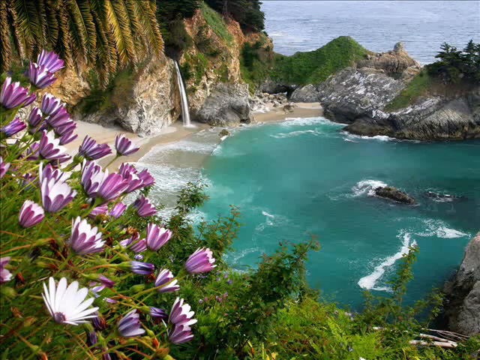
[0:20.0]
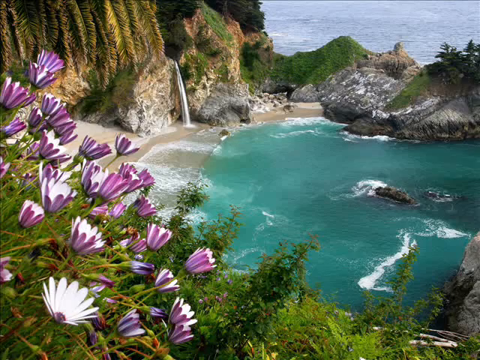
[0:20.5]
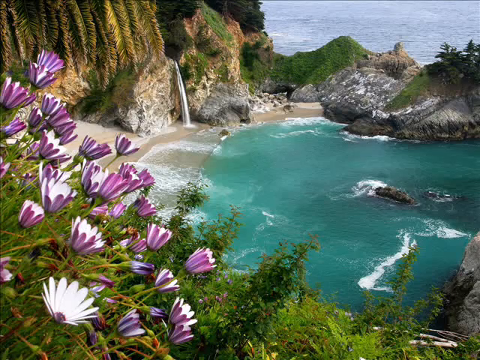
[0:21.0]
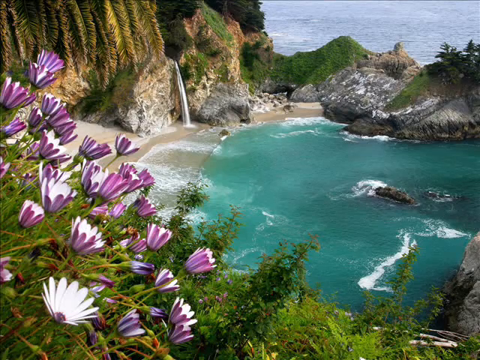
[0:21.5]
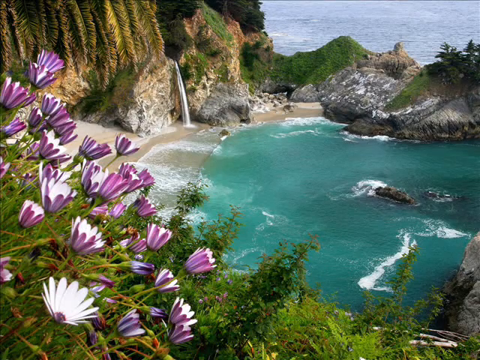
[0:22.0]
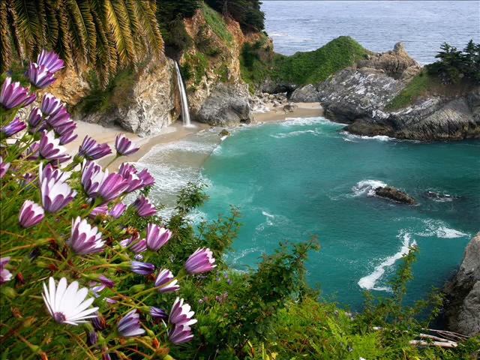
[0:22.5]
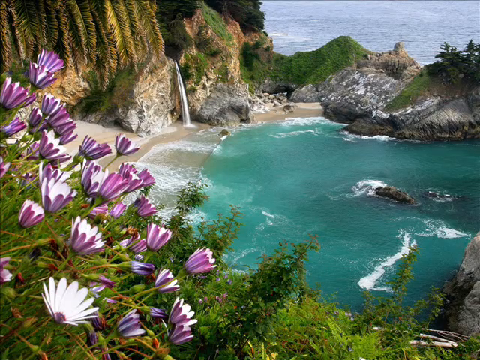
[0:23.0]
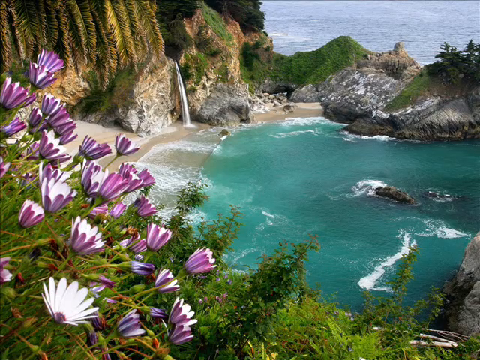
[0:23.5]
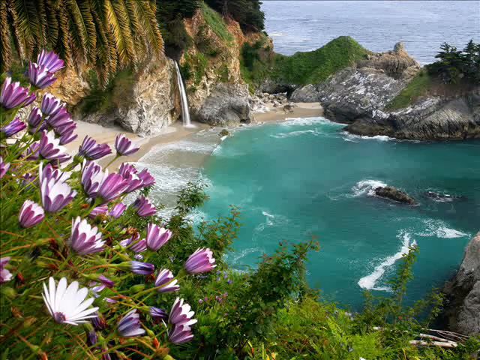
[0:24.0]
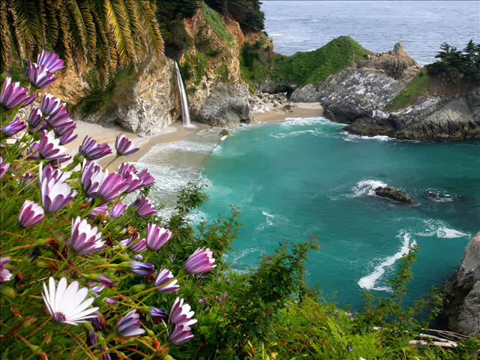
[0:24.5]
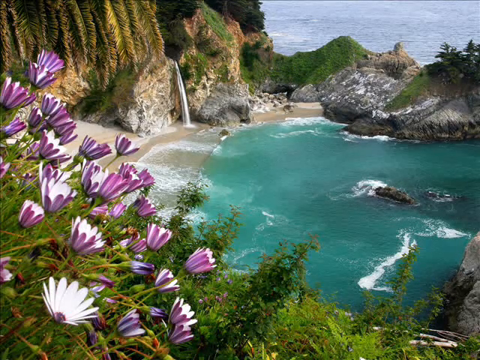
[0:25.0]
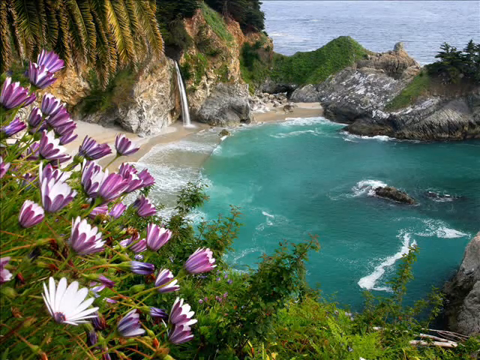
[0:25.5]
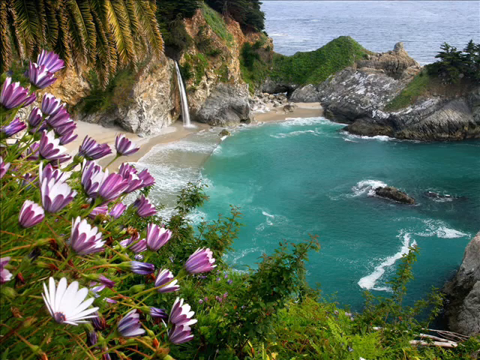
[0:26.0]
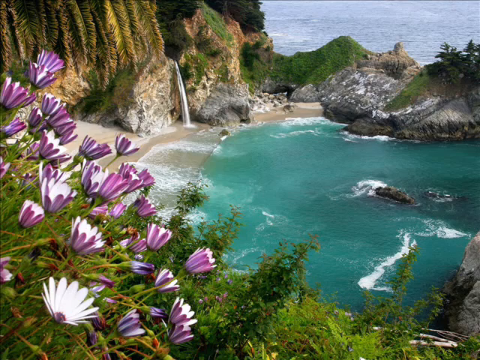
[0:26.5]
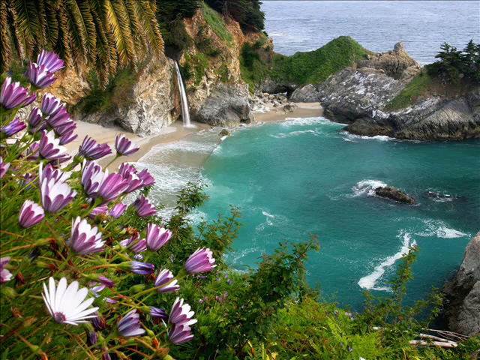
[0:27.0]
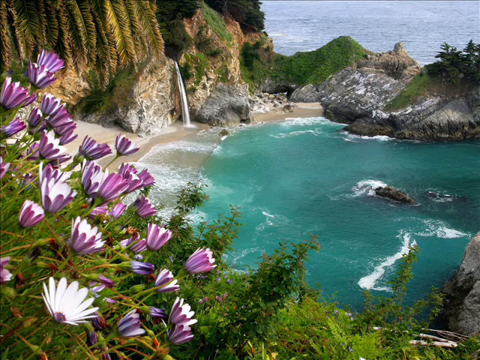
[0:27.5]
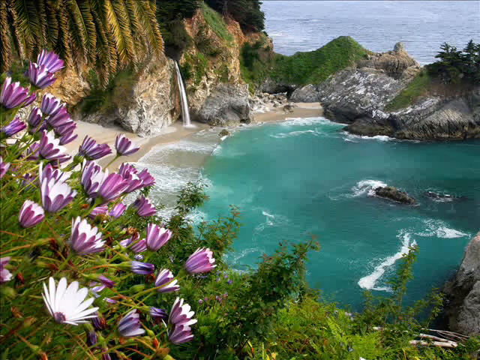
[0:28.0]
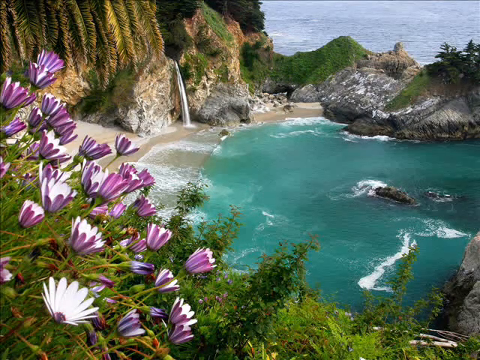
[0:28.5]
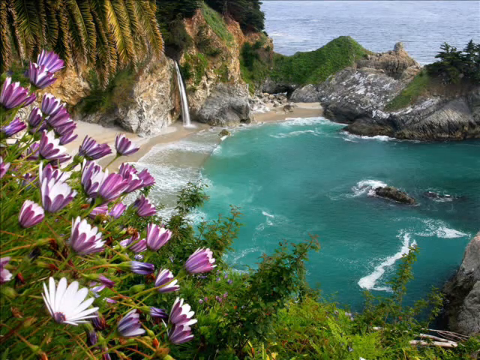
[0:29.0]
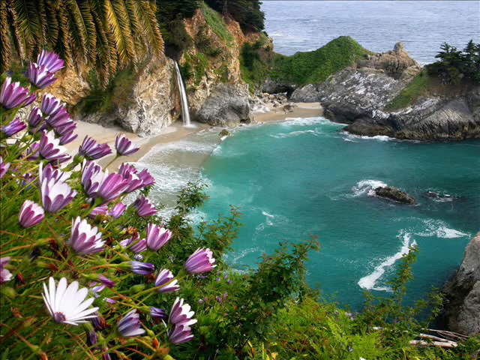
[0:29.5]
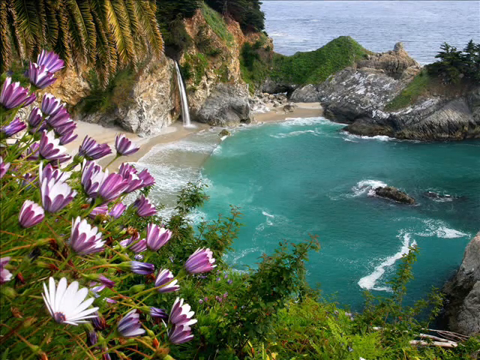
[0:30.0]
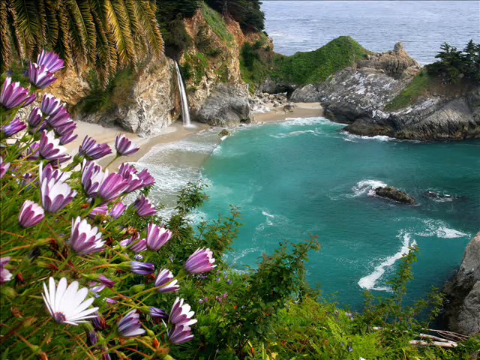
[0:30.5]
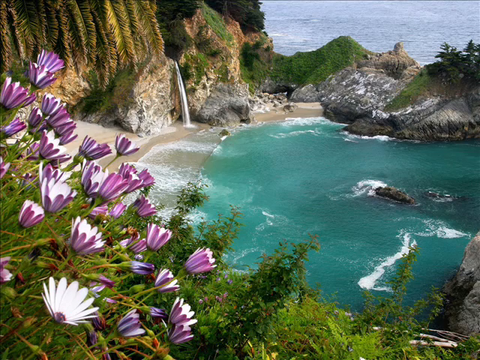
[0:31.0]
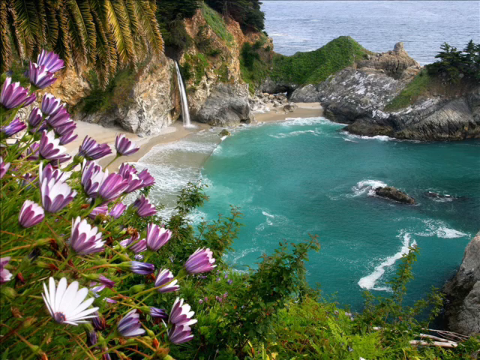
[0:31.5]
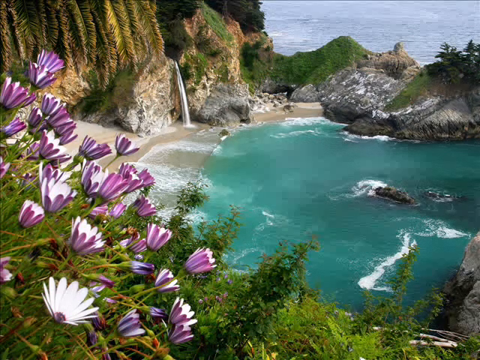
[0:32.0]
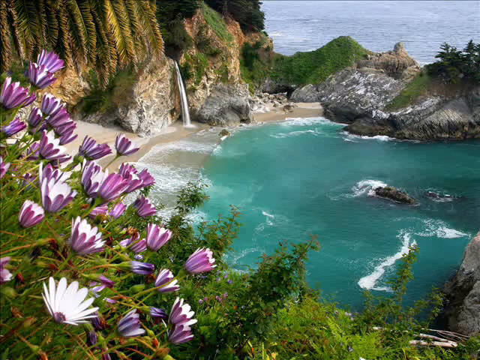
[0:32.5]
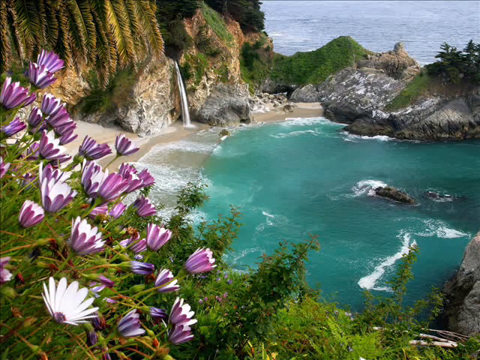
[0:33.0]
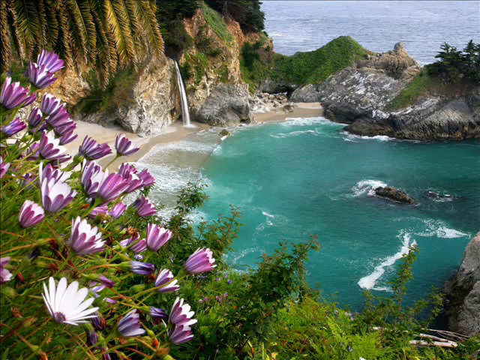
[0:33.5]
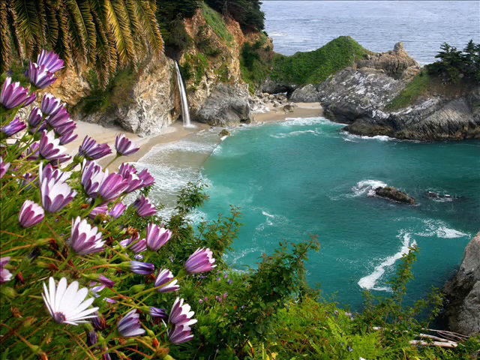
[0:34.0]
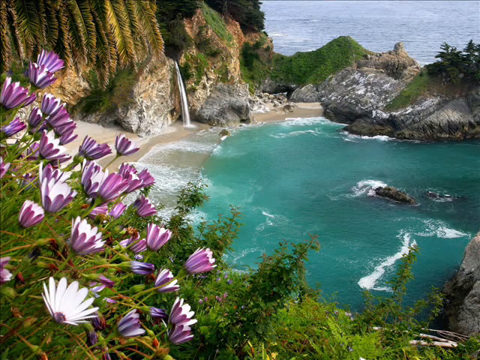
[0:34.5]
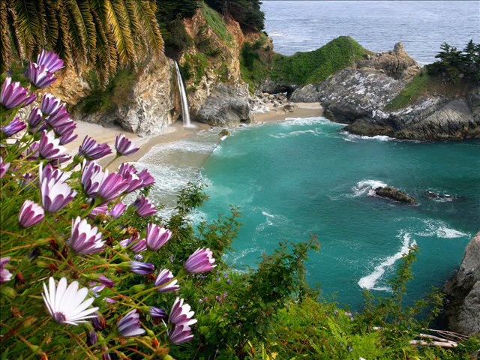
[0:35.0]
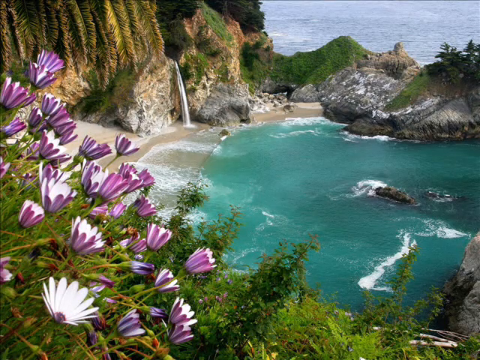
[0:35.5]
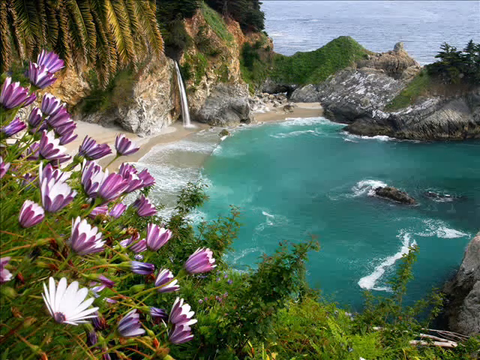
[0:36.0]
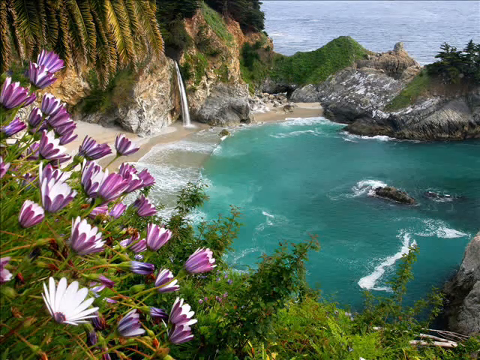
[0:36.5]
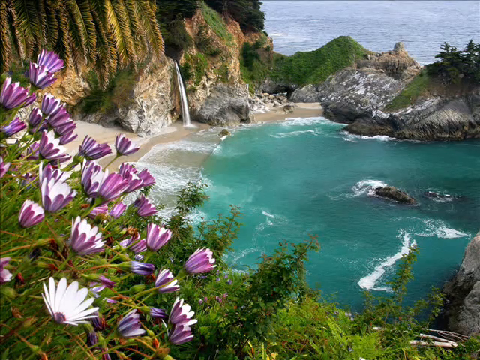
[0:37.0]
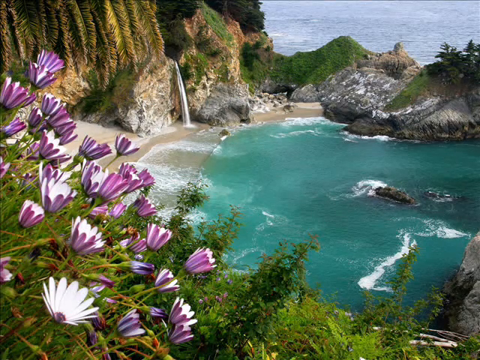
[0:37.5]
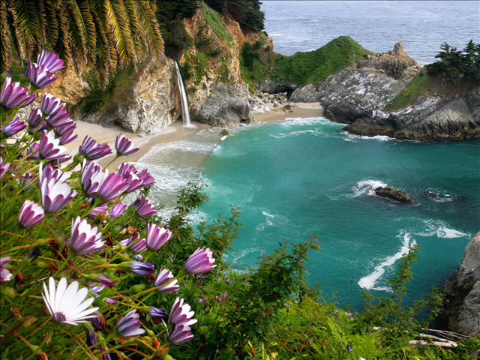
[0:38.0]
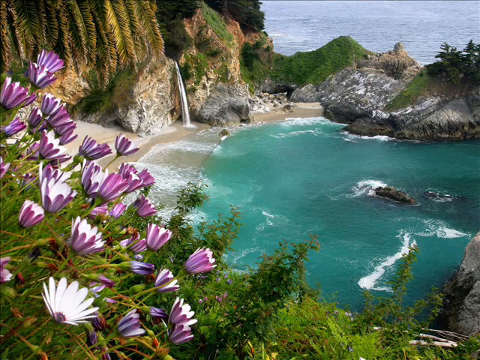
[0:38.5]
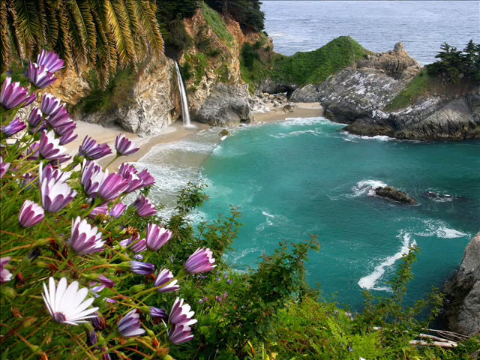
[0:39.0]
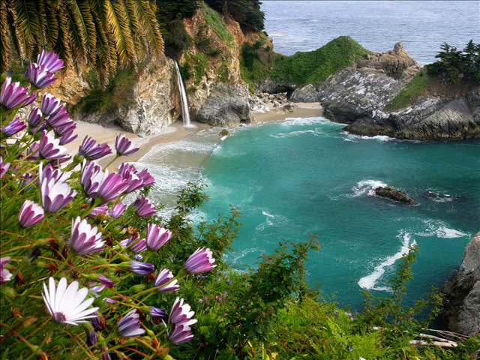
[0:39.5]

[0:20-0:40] The image still does not change and seems to be a still image. The flowers on the bottom left show a couple of shades of purple. The open flowers are white inside and purple outside; those further away, closer to the top left corner, are a darker purple, while the closer ones are a normal bright purple like a grape. Some flowers that have not finished blooming are a mix of dark and light purple. Fresher ones that have not finished developing their color are reddish green, with red and a bit of yellow at the end, while the part closer to the stem is more green.